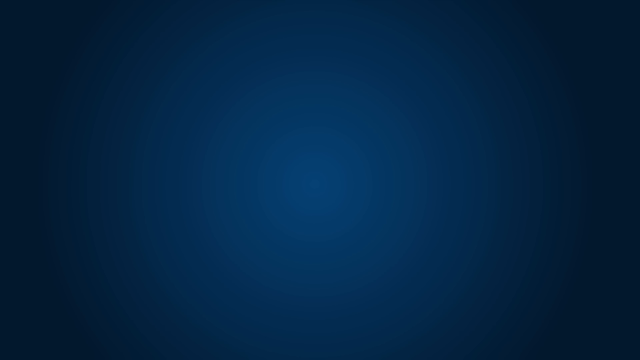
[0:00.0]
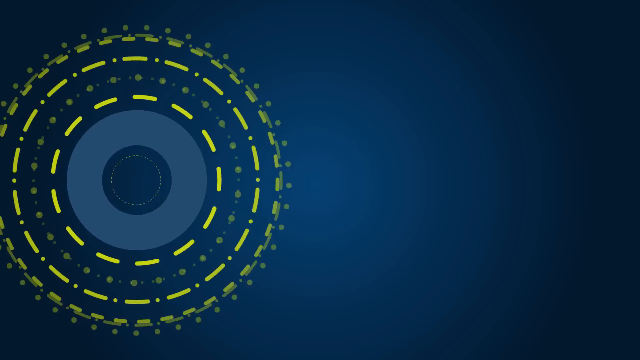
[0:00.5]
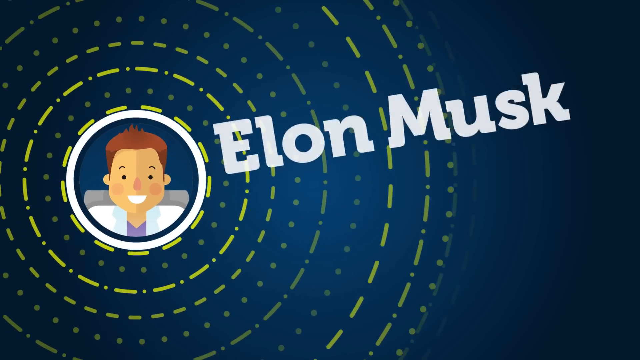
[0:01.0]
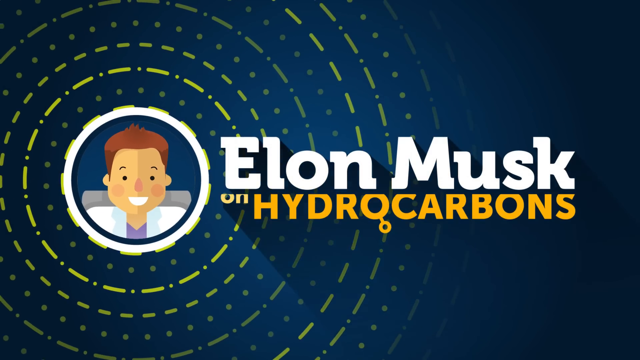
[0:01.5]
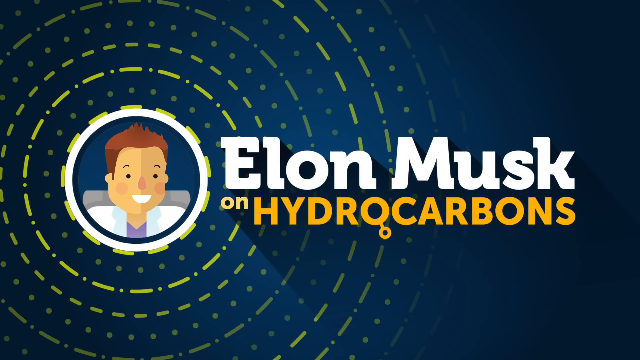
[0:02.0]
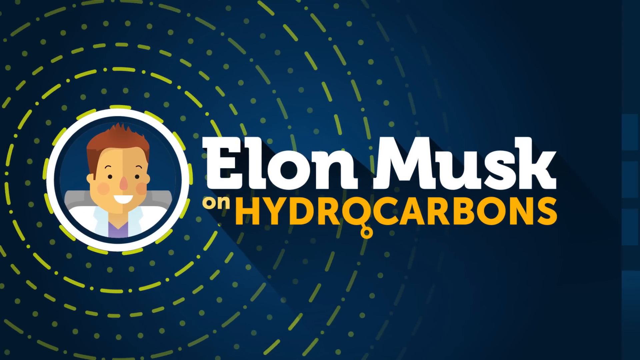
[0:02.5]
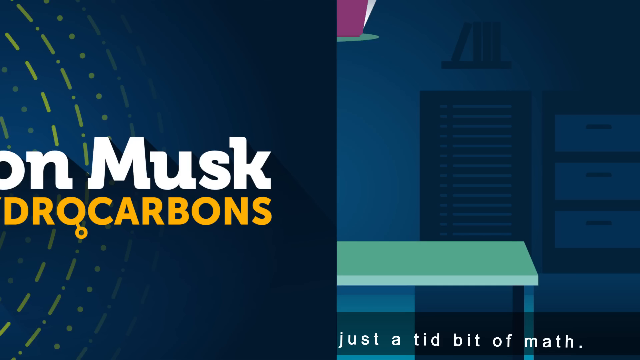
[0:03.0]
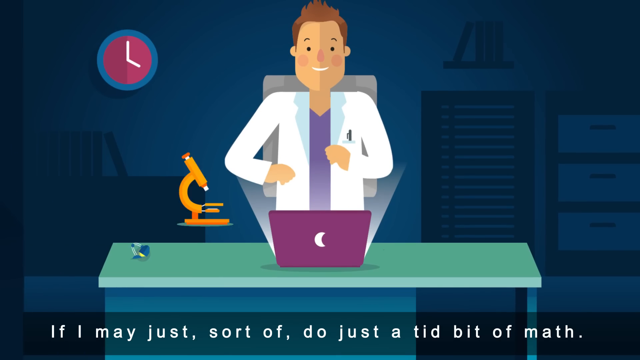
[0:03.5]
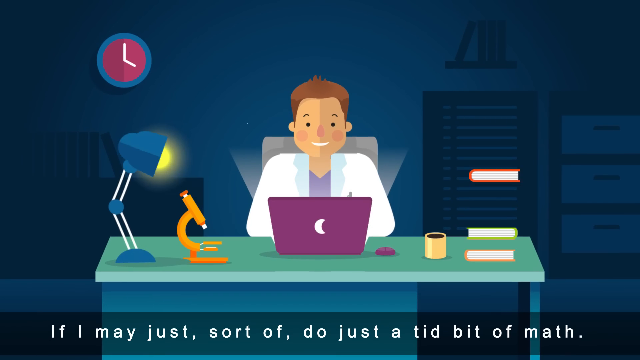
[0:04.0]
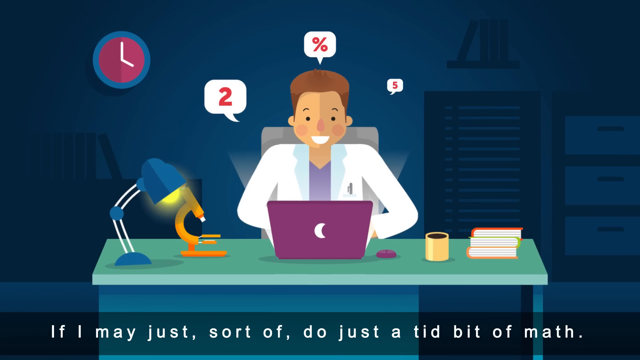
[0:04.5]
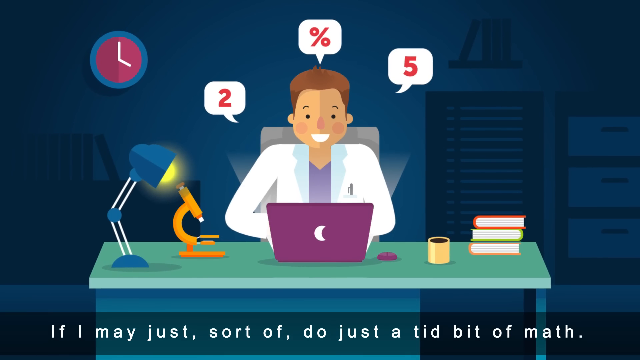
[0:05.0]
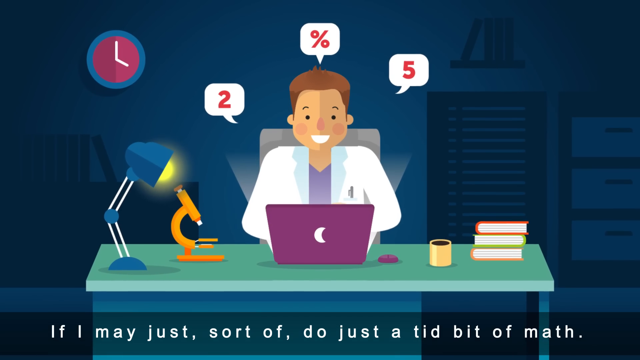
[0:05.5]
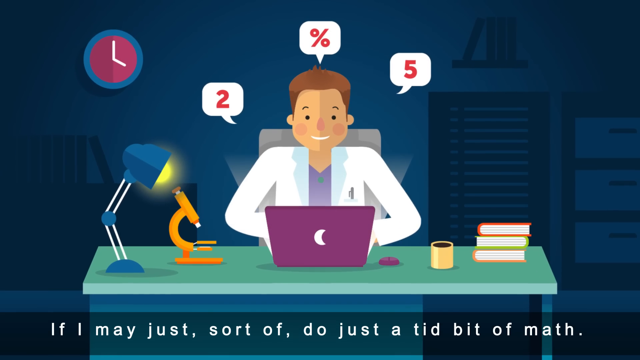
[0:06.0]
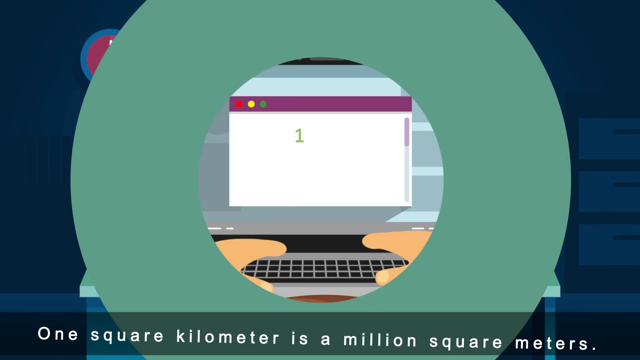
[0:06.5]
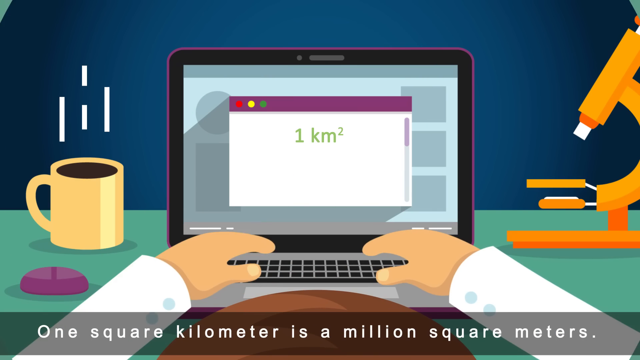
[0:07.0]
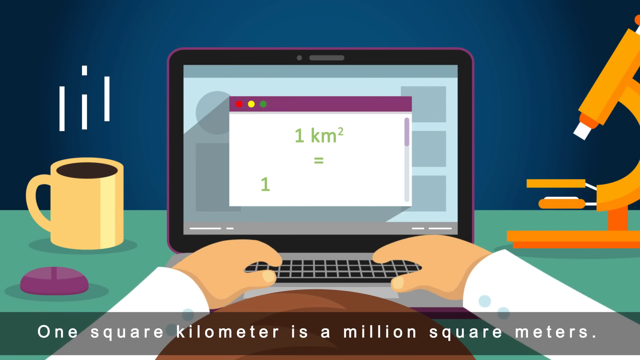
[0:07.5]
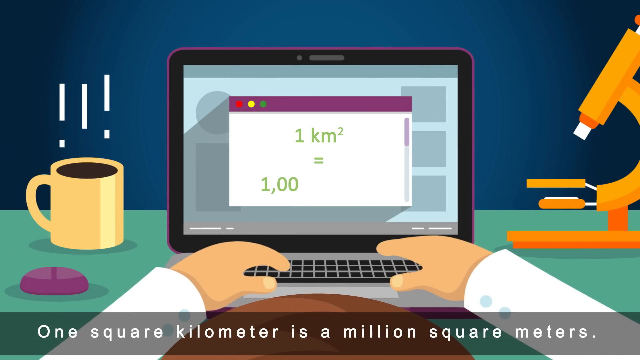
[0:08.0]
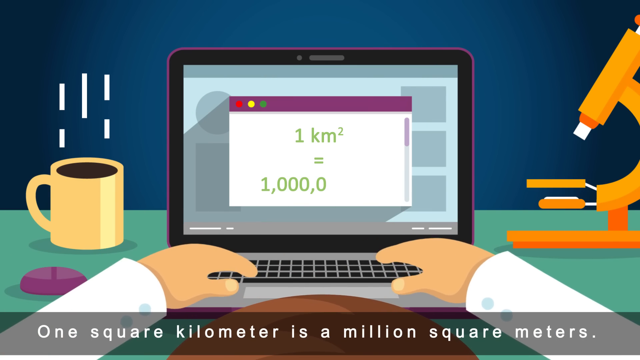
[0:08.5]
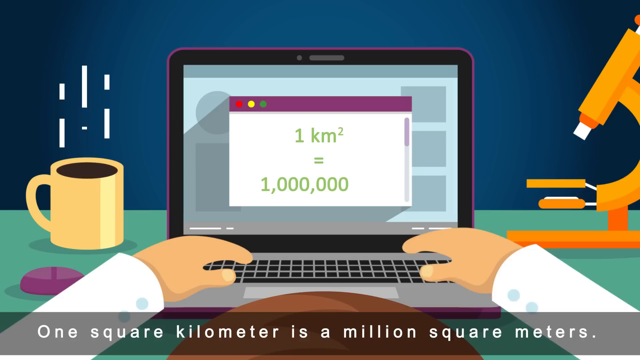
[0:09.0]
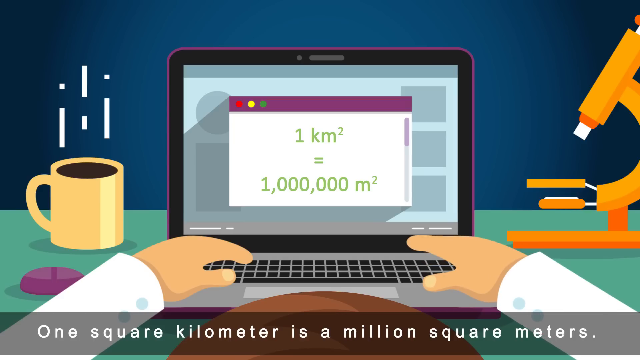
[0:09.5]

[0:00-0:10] The video opens on a navy-blue screen, and a yellow burst of circles pops up on the left side with an image of a man inside the circle. The words "Elon Musk" appear on the screen in white, and the cartoon image appears to be Elon Musk. He is smiling, has black eyes, and has two round circles on his cheeks to represent rosy cheeks. Underneath the words "Elon Musk," "on hydrocarbons" is written in orange. Next, a cartoon image of Elon Musk sitting at a desk is shown. It looks like the room is dark, but the desk area is lit by a desk lamp on the left side of the desk from the viewer's perspective, which is the right side from the person's perspective. A clock is on the wall in the upper left corner of the frame. The desk lamp is sitting on top of the desk in the lower middle portion of the frame. The desk is turquoise on top and blue on the bottom portion. There is an orange microscope on the desk next to the desk lamp, a cup of coffee on the desk, and three hardcover books stacked on top of each other on the desk. Elon is sitting in a gray office chair, smiling at his computer as he types on it with his hands.